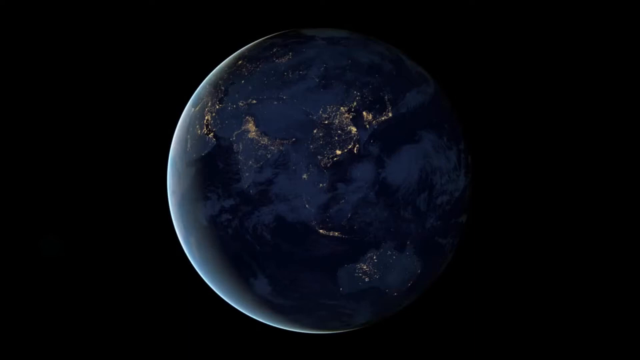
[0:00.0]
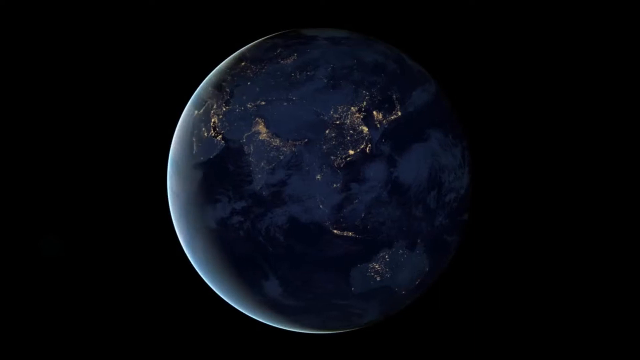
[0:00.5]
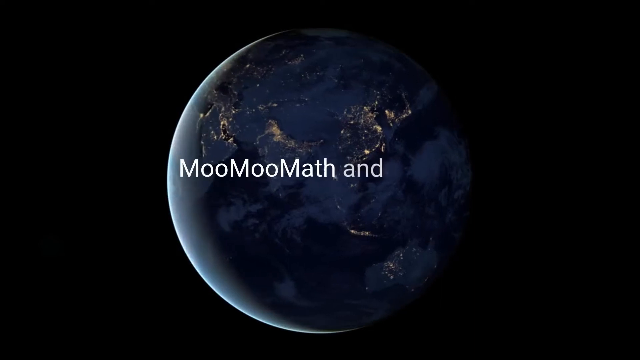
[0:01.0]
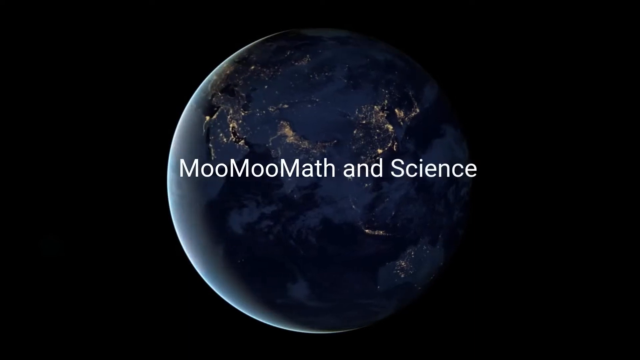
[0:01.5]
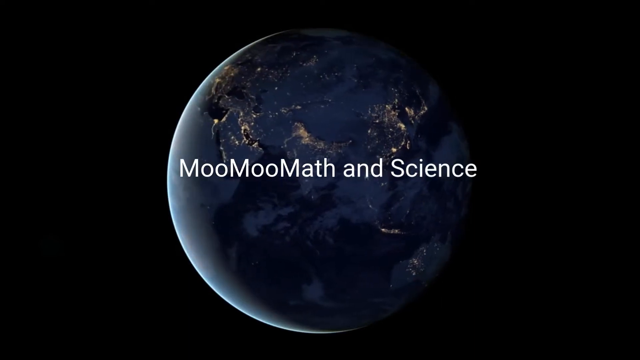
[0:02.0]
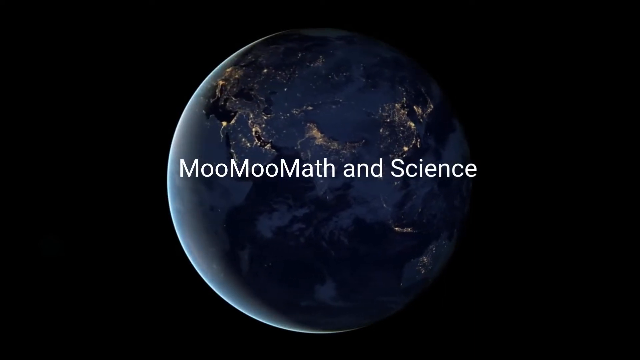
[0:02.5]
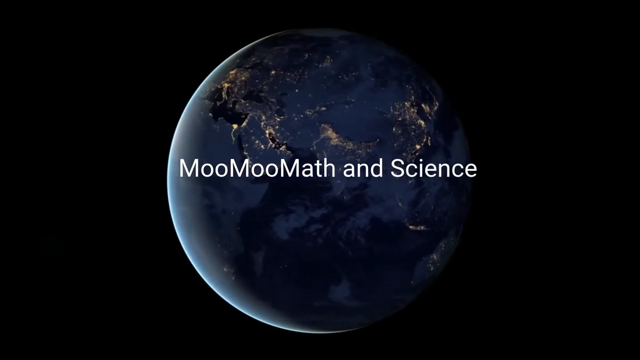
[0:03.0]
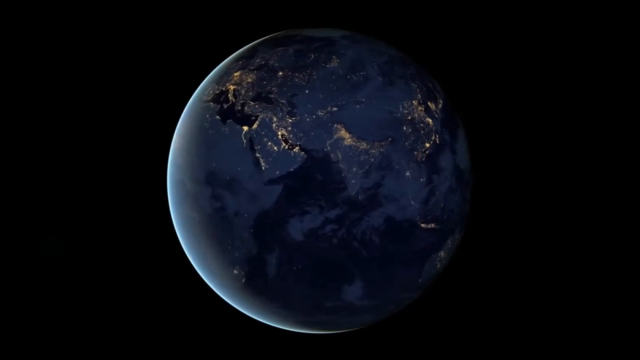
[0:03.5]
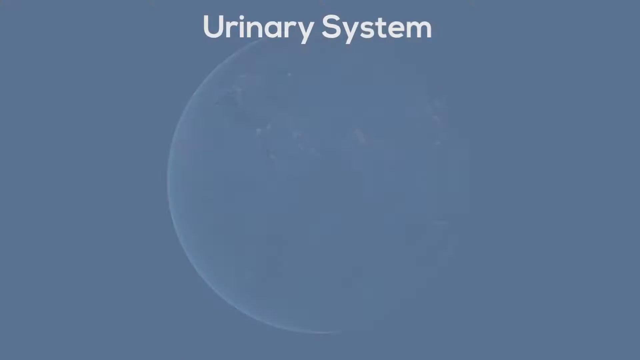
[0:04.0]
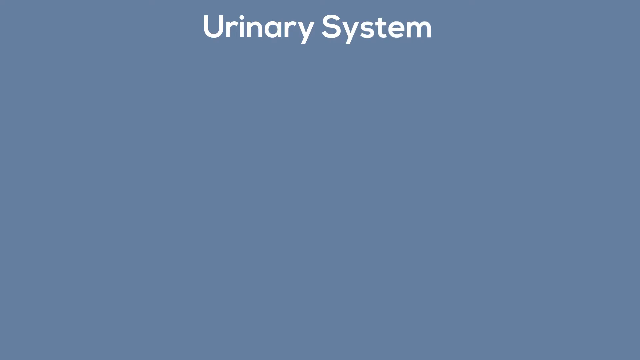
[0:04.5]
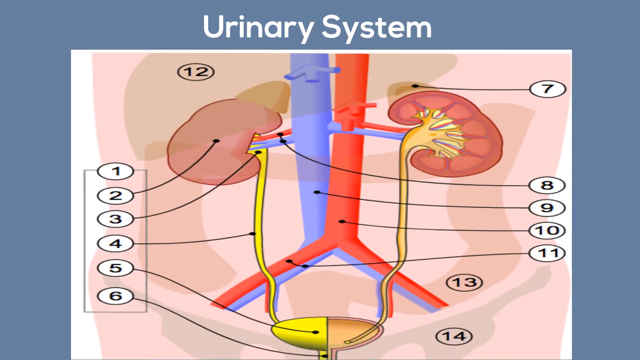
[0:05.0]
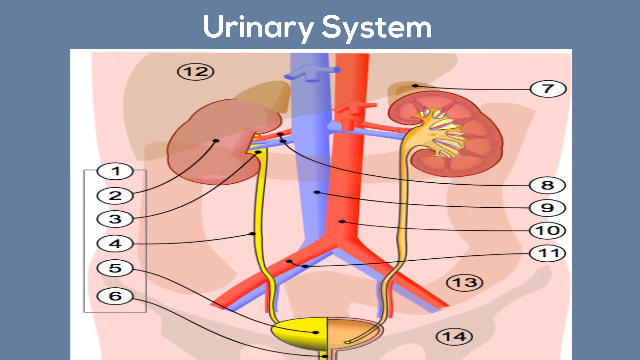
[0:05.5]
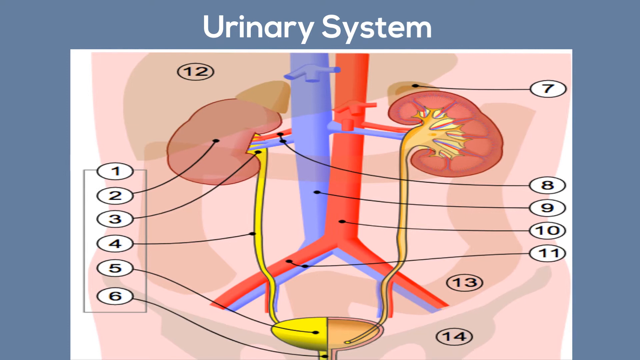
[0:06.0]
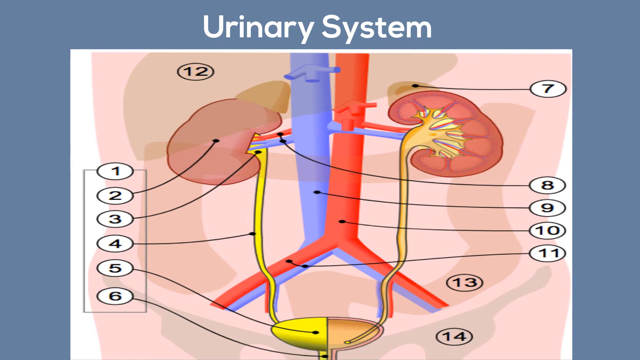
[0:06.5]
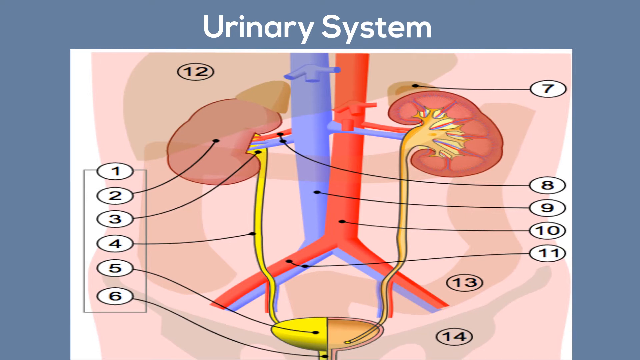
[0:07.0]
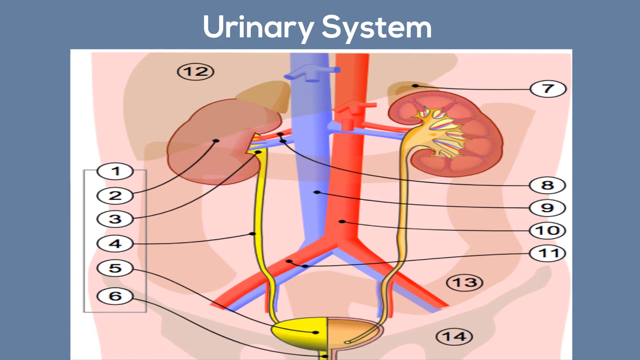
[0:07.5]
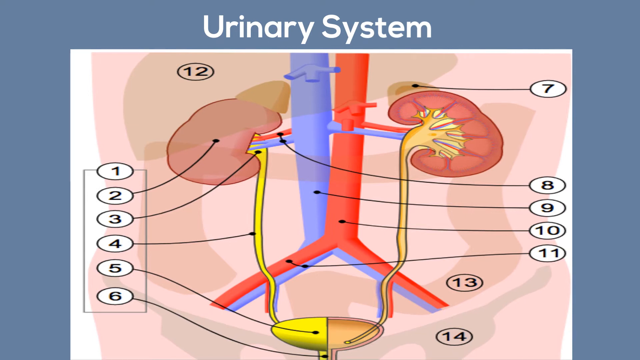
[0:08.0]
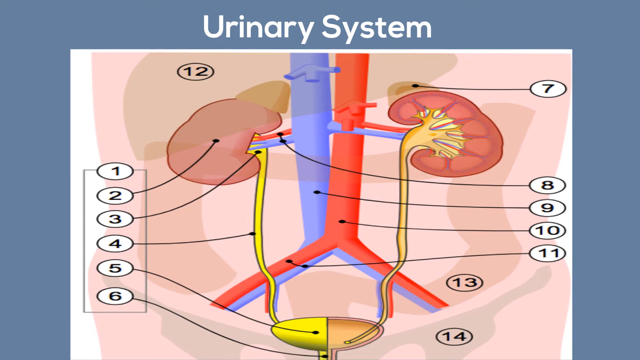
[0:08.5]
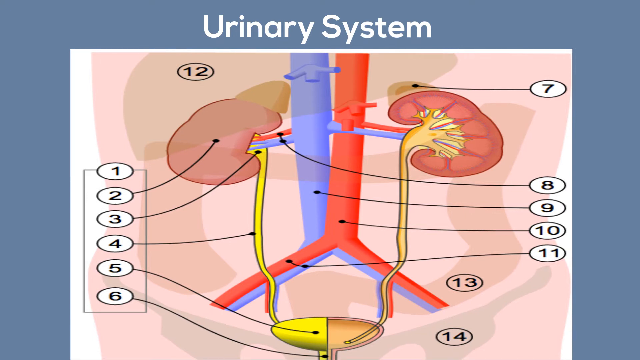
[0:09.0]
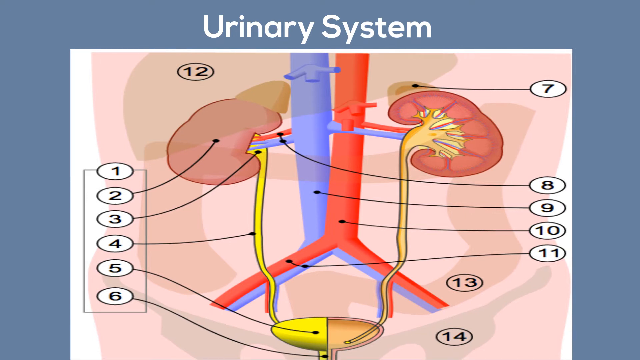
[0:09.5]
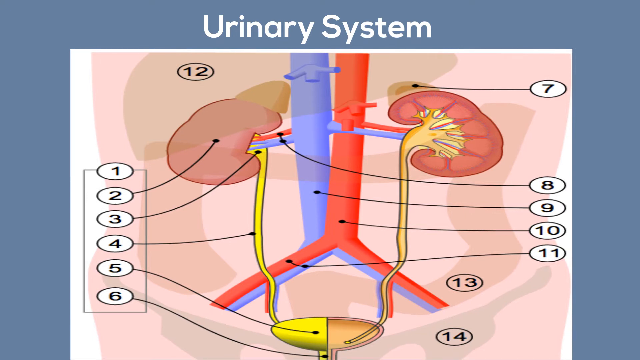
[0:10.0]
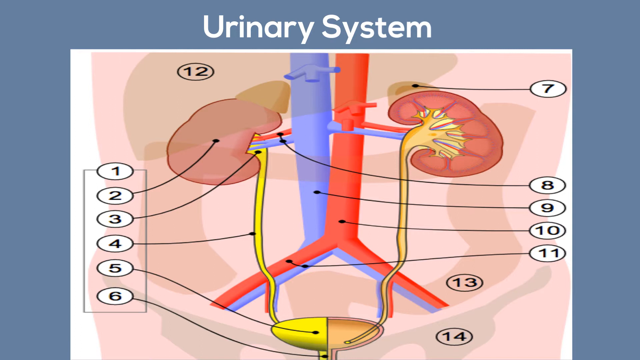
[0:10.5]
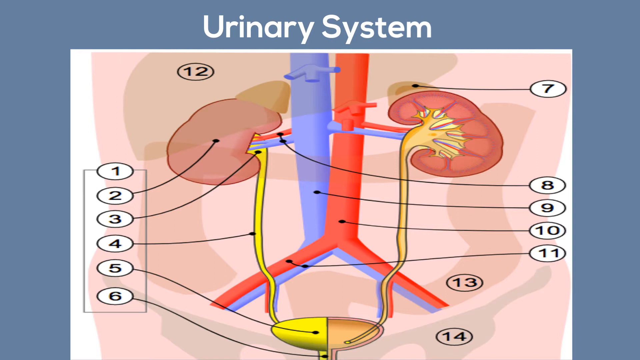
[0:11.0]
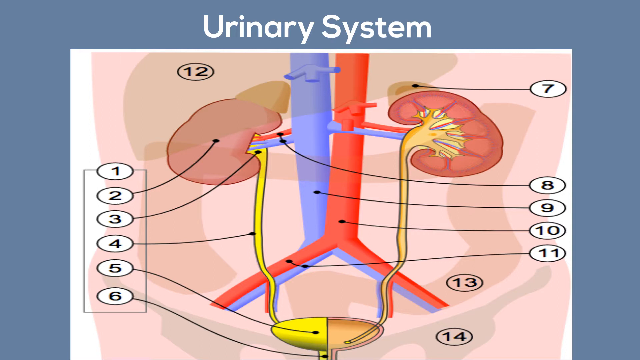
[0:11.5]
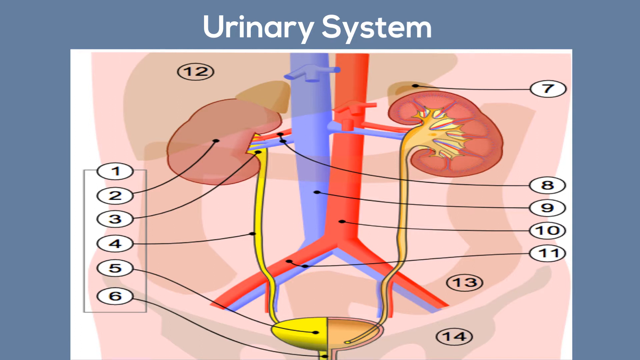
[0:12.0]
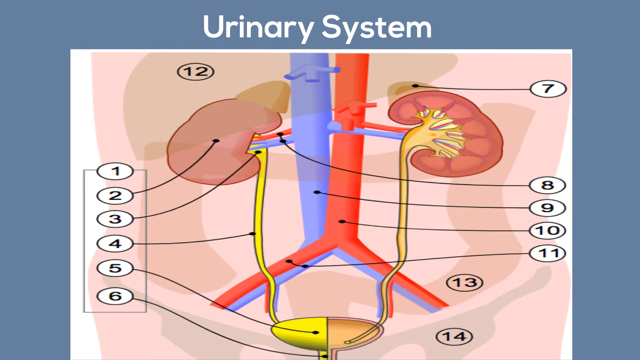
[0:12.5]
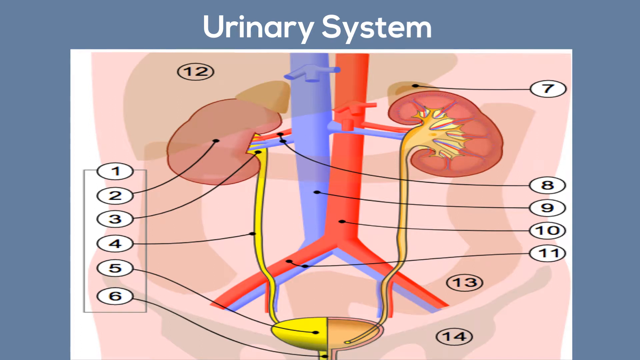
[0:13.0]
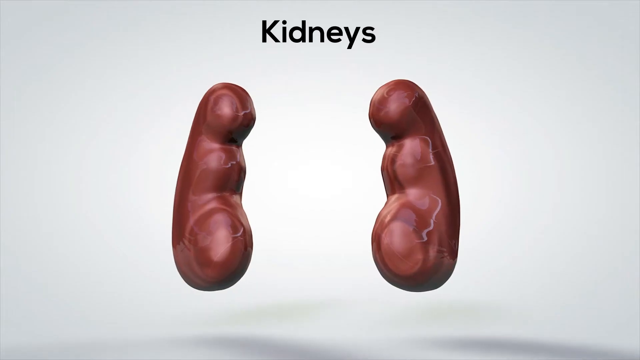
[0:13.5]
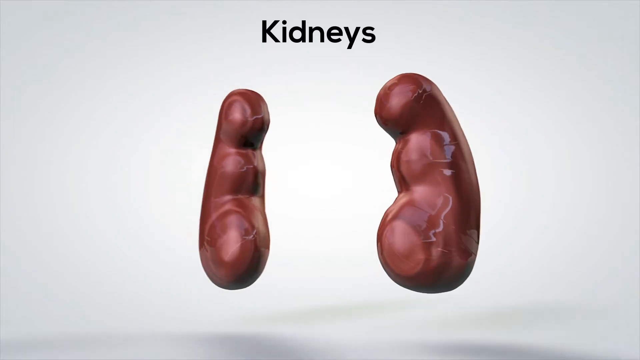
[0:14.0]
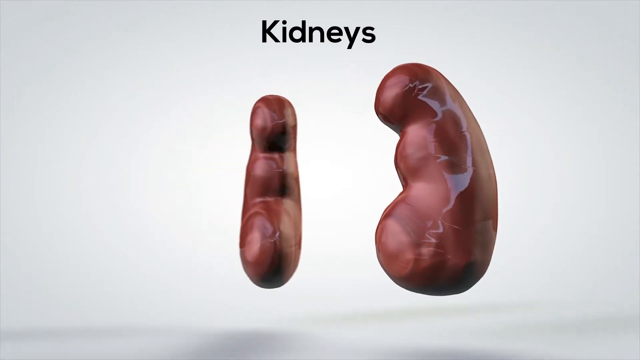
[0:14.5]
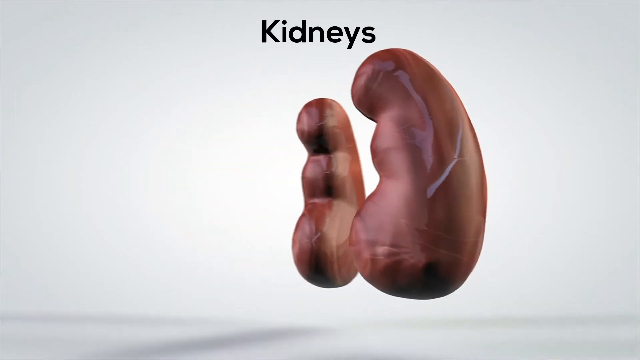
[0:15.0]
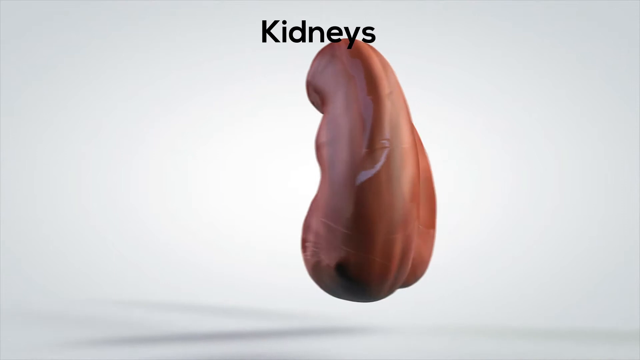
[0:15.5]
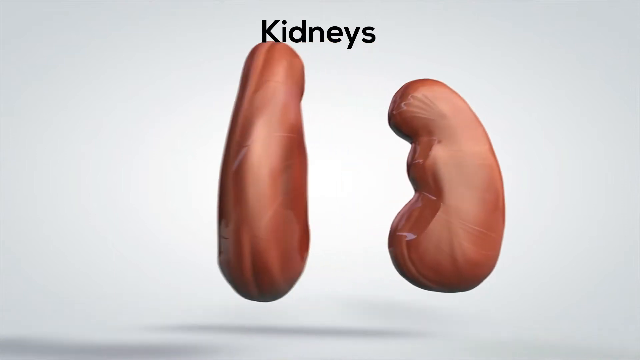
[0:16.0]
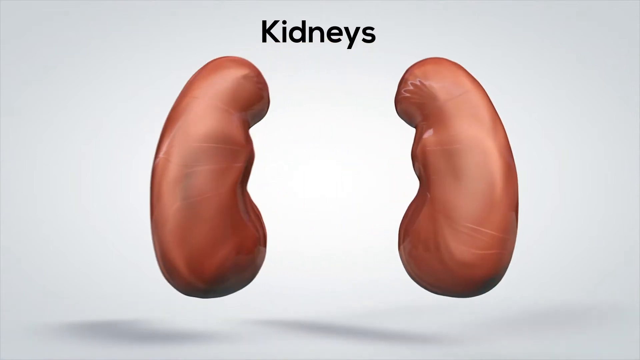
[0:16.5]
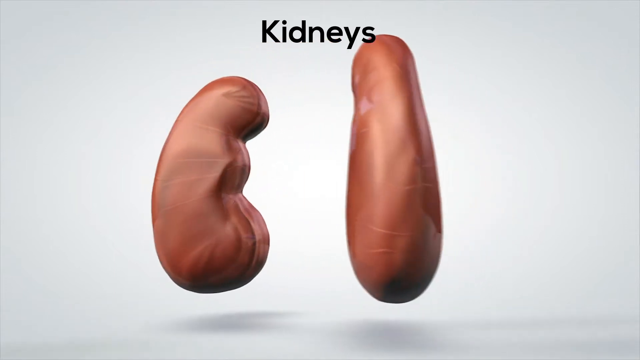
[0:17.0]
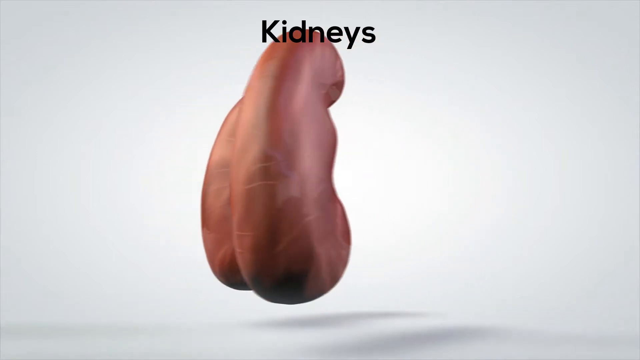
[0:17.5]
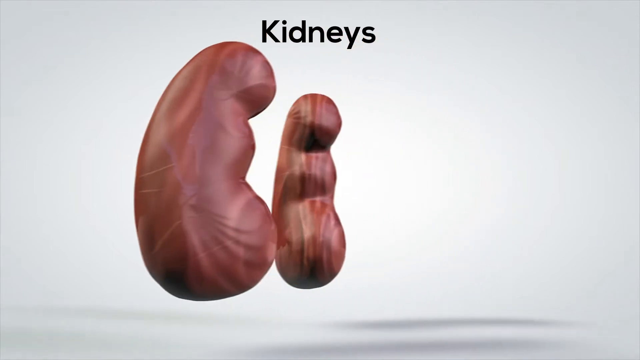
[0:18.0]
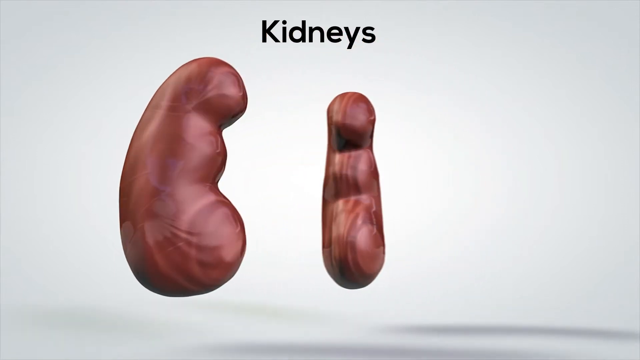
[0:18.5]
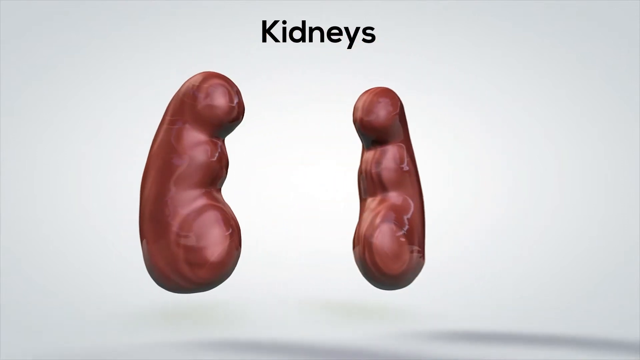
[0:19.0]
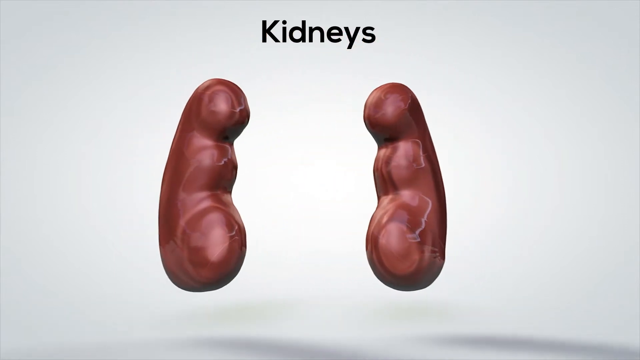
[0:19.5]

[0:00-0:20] A blue globe of planet Earth turns in a circular motion. The text "Moo Moo Math and Science" then appears in white across the Earth behind it; the video looks like a tutorial from an educational channel. Next comes a diagram or drawing of the urinary system, in which the kidneys are clearly visible. The other parts of the urinary system are labelled with numbers from 1 up to 14, and black arrows point at the different parts. The video then moves to a screen with the word "kidneys" written in black at the top, where two 3D kidneys move in circular movements.